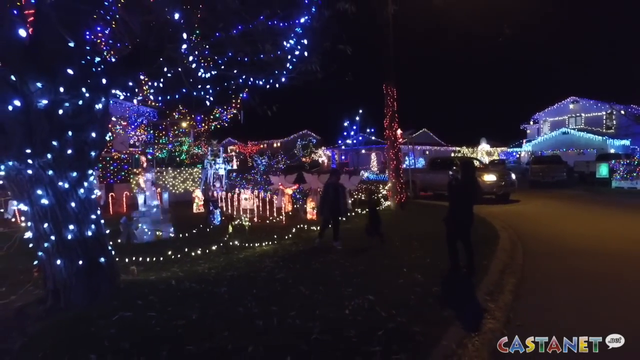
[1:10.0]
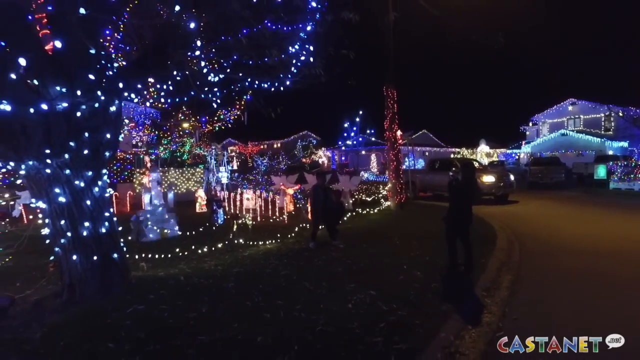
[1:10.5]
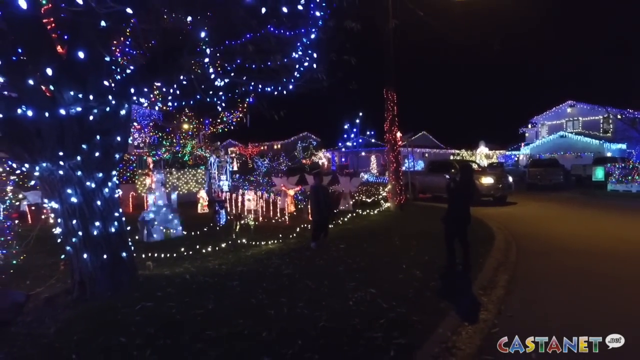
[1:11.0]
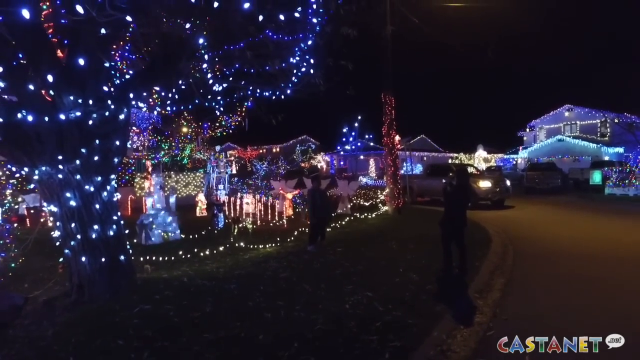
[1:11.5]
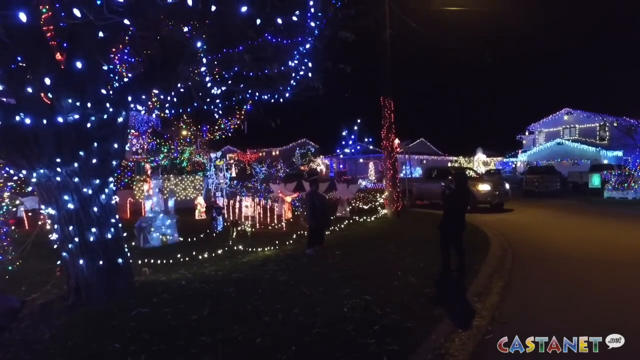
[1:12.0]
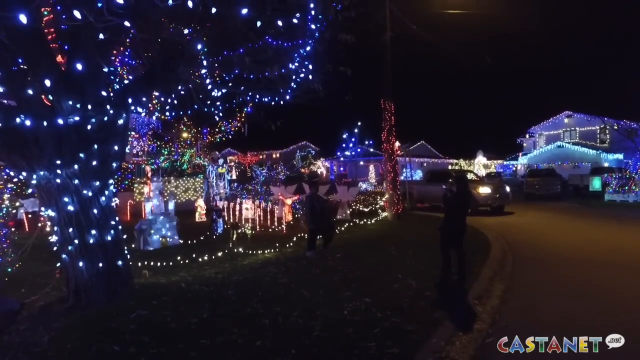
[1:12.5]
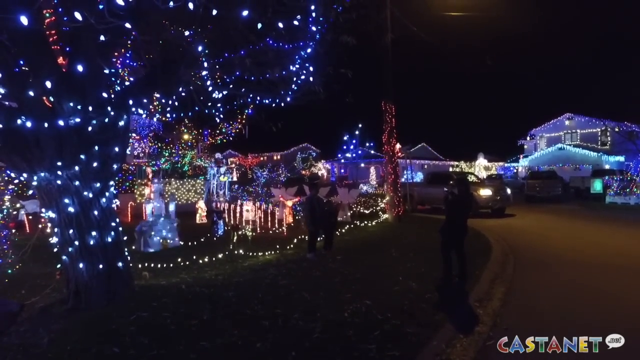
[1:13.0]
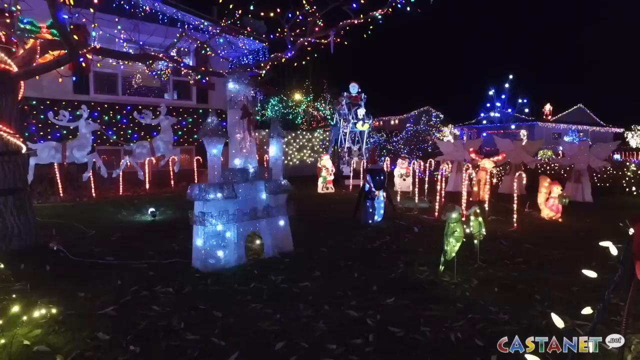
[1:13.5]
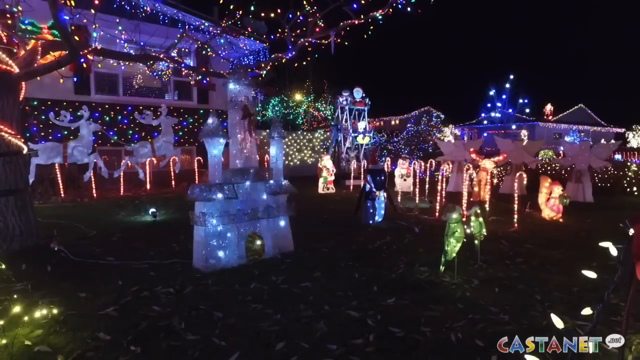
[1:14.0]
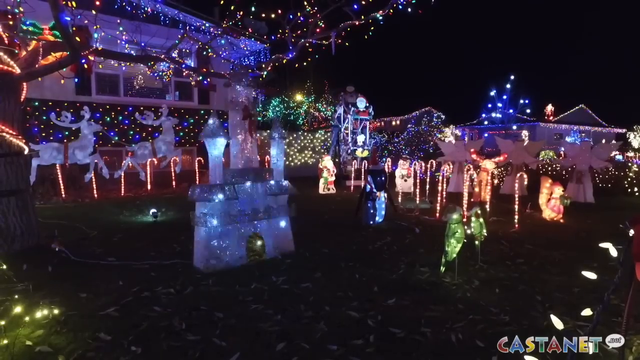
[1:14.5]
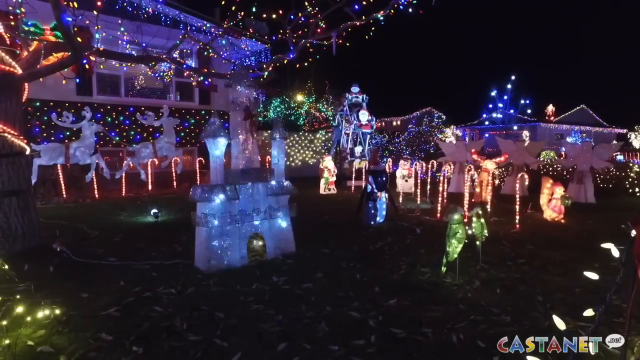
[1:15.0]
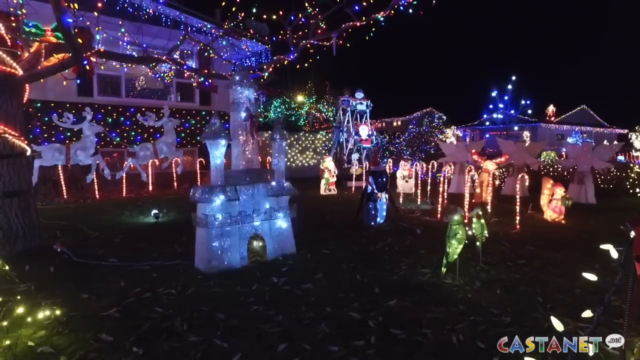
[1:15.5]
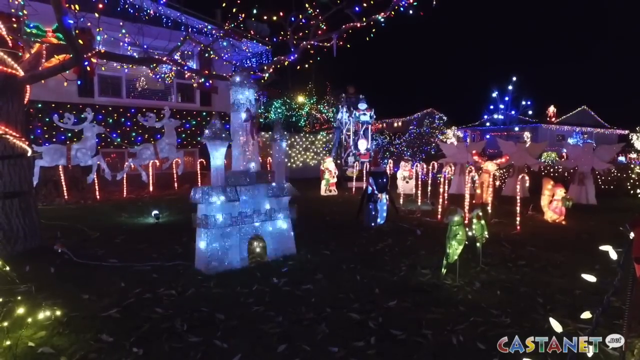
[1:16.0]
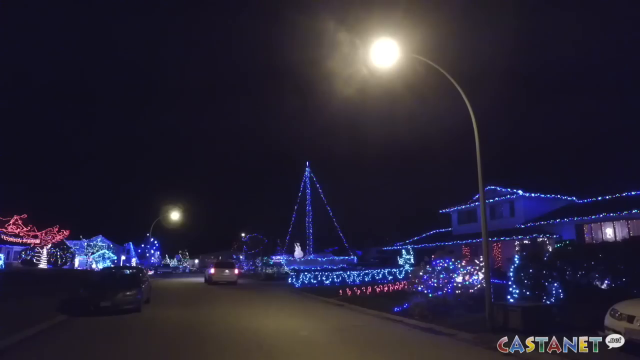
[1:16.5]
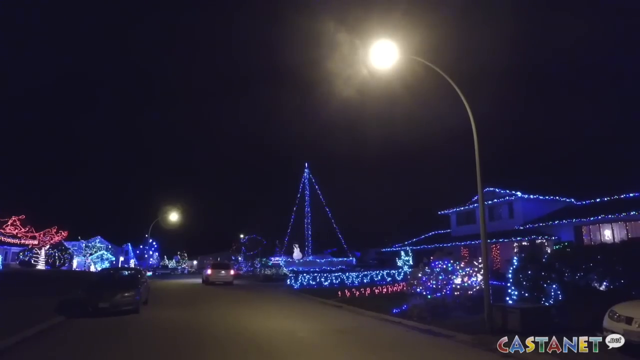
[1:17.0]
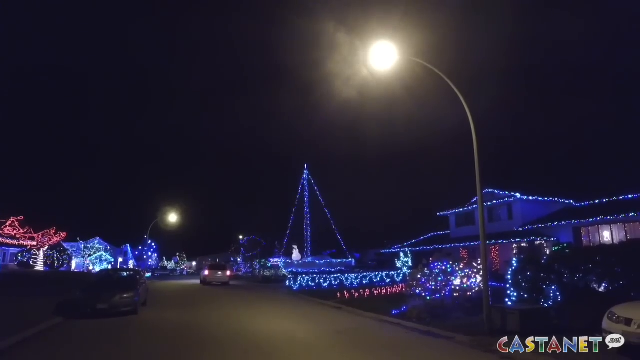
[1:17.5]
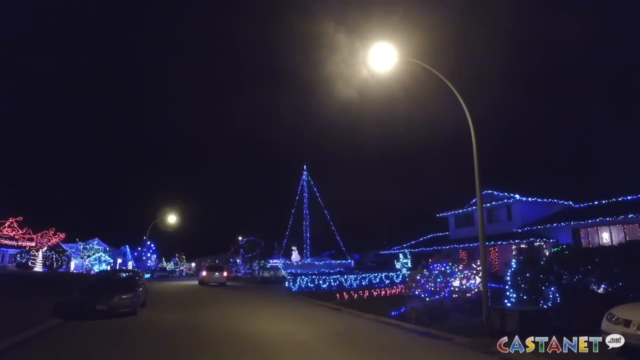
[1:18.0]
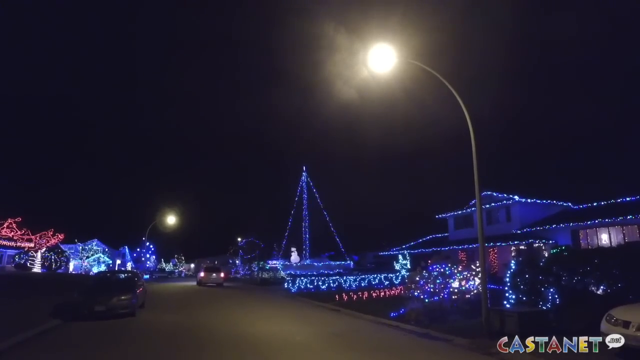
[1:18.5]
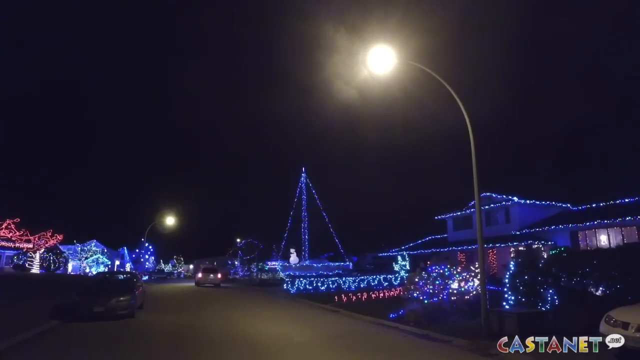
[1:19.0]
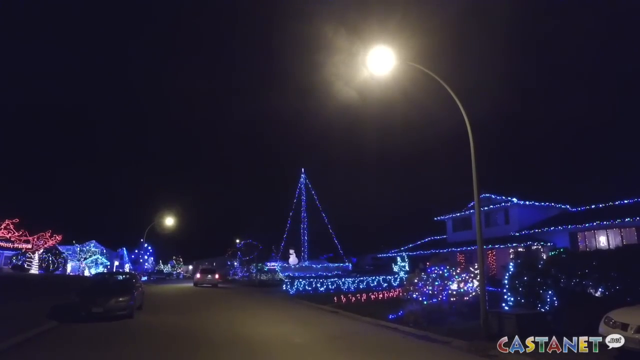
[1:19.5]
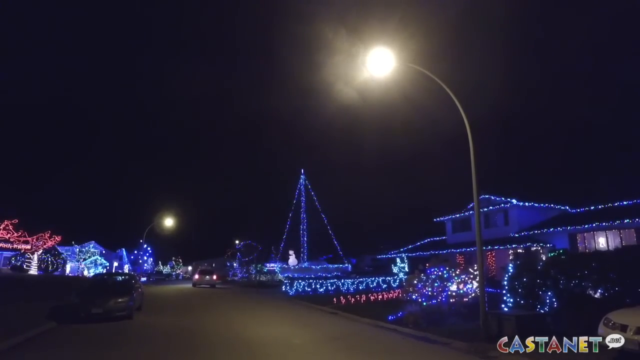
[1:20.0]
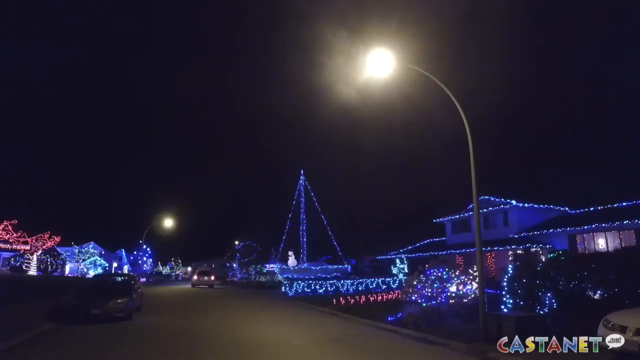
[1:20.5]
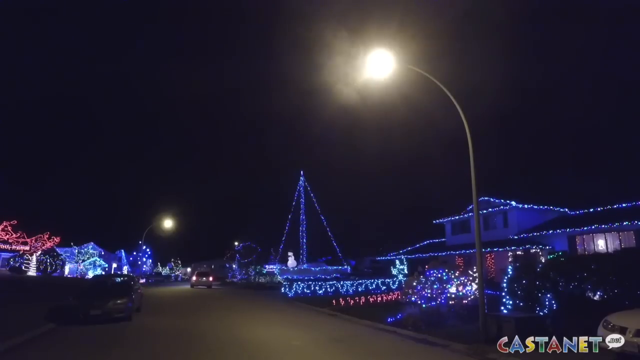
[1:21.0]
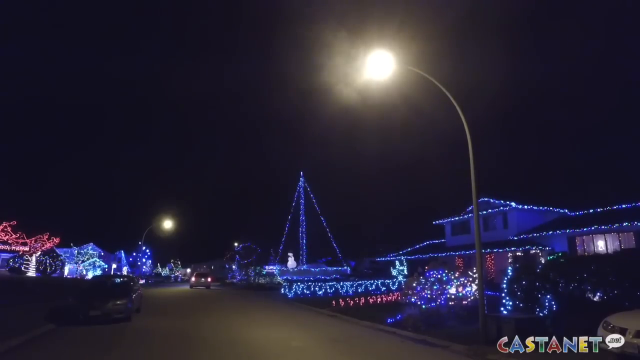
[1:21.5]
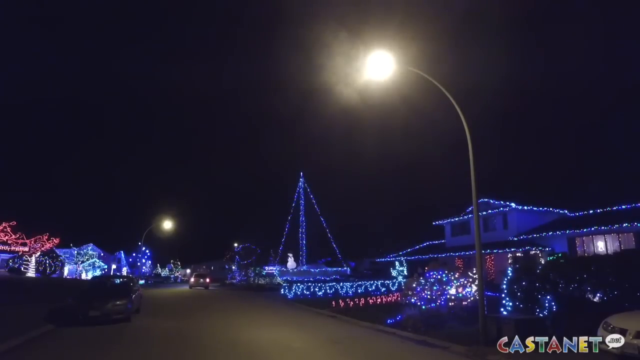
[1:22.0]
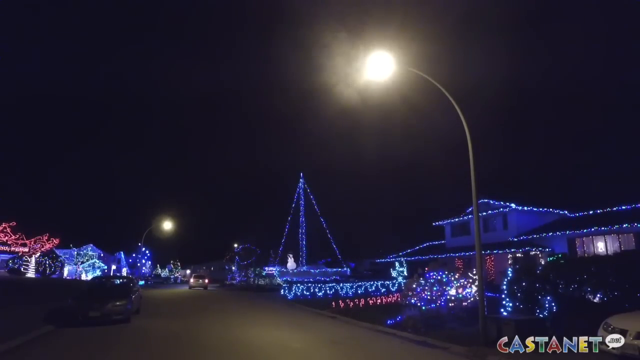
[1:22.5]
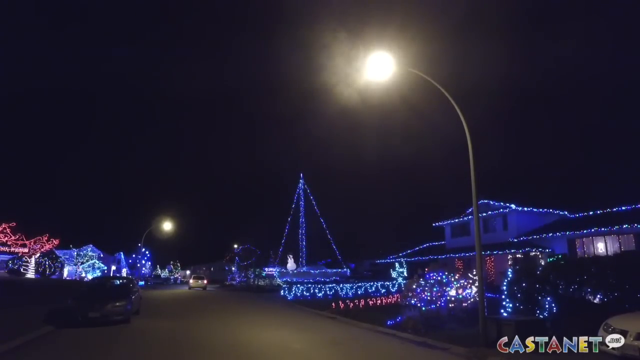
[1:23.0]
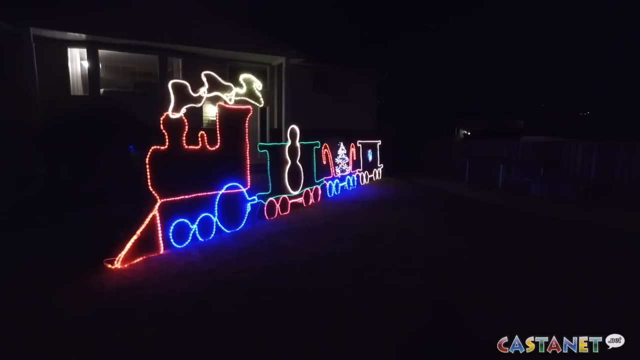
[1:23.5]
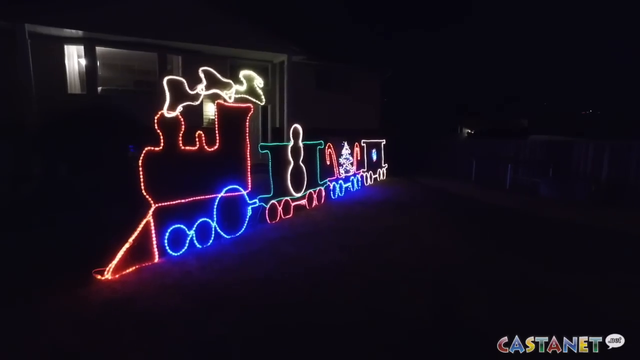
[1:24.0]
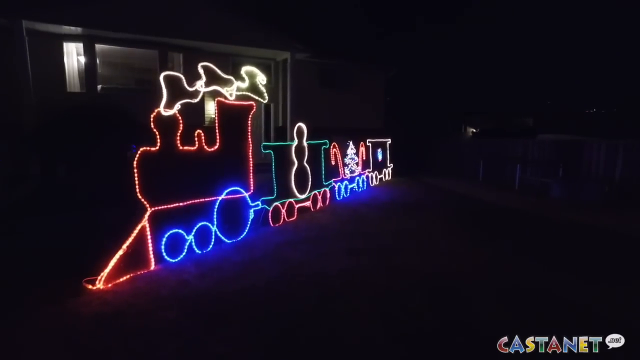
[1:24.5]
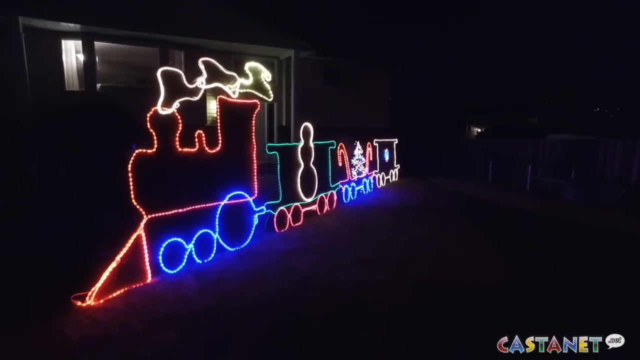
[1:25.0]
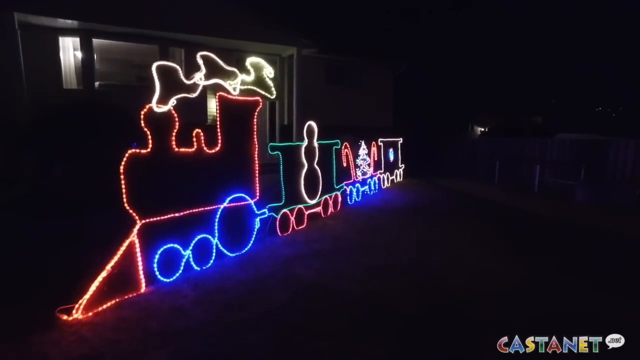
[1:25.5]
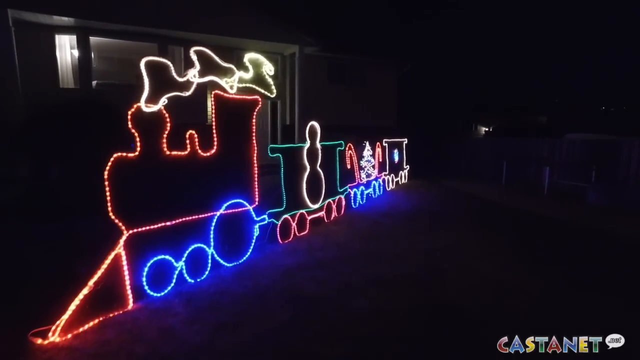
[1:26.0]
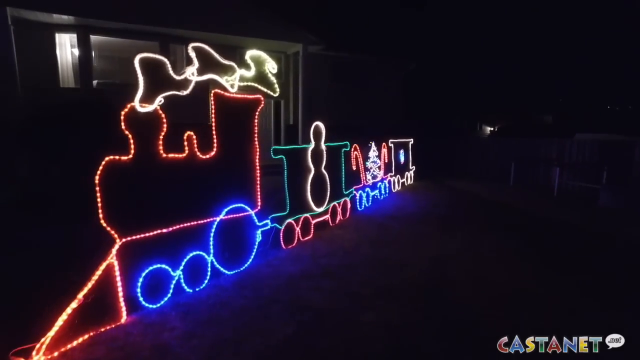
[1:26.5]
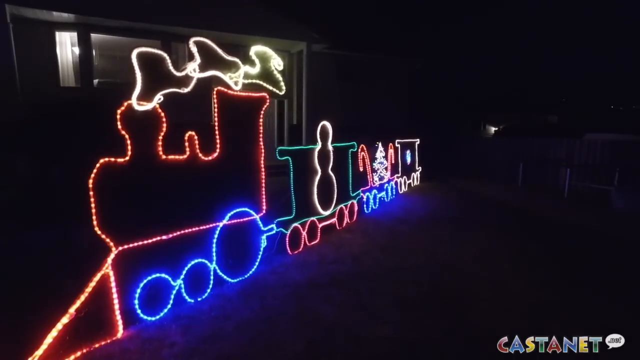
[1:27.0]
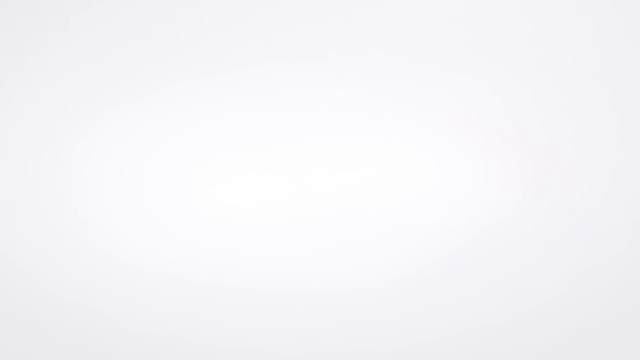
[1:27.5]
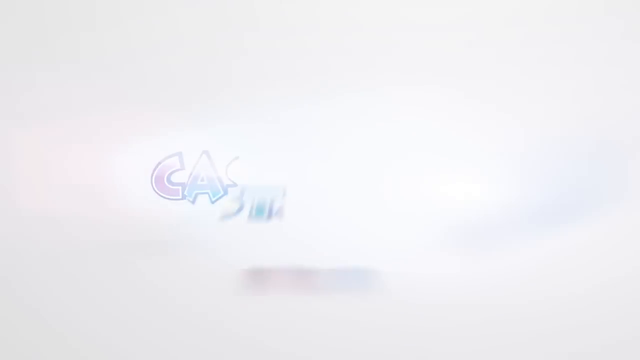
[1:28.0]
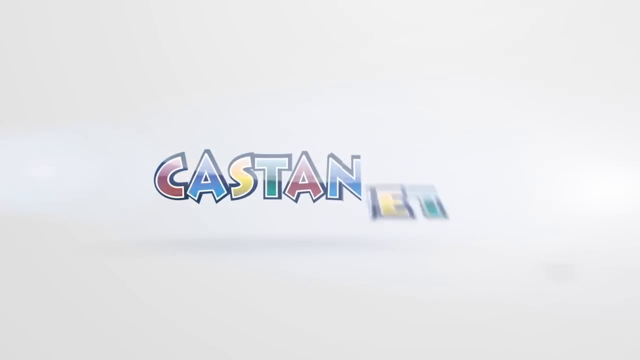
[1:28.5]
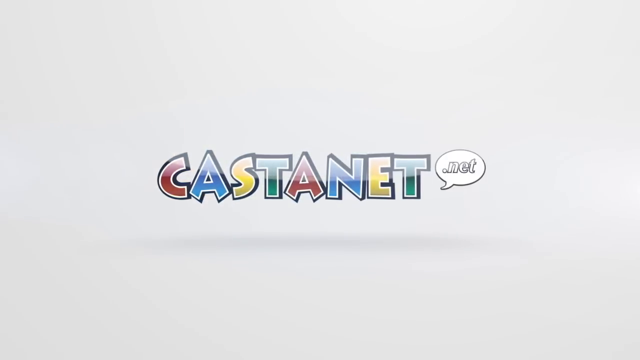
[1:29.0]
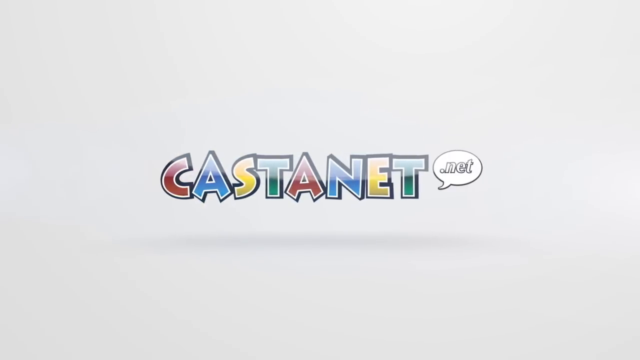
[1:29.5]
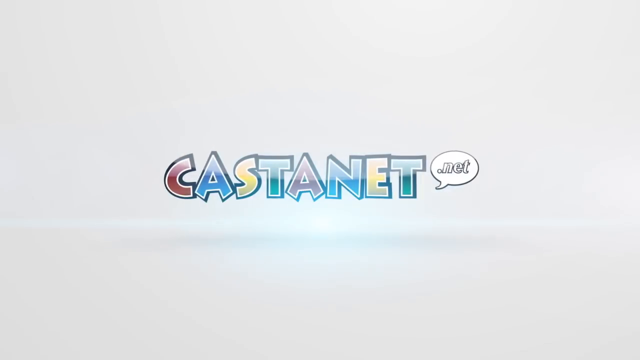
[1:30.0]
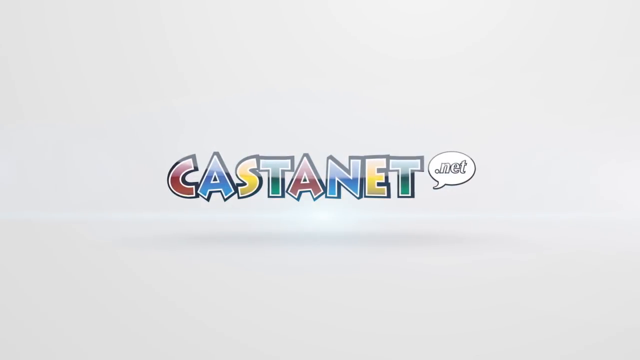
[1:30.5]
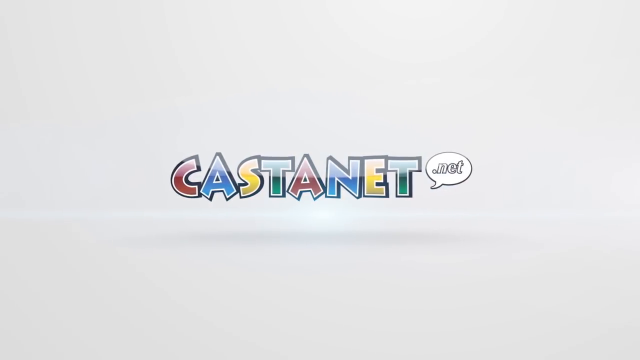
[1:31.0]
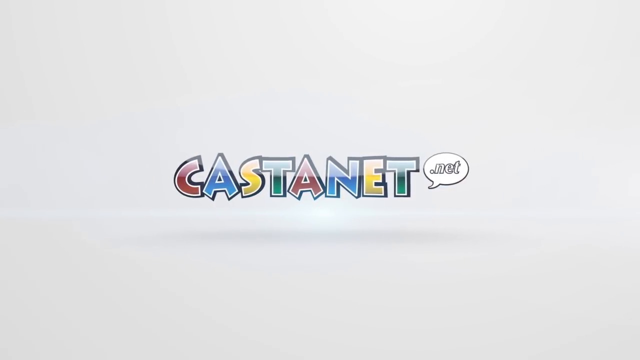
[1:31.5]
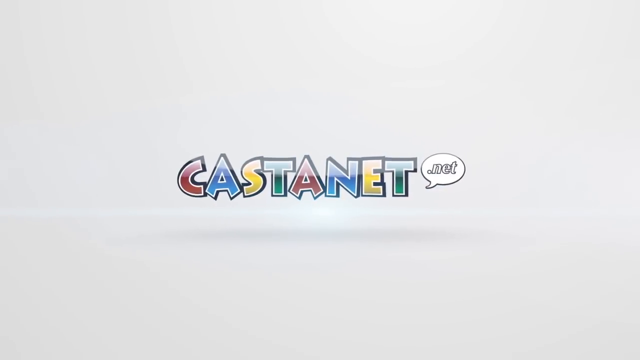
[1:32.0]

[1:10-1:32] A truck with both of its lights on is in the background on the left side. Two people can be seen, one walking towards the other, along with all the Christmas lights on a few different houses that blur together in the background so they cannot really be counted. One house has so many blue lights that it looks blue. On the right side is a big part of a tree with a bunch of little white light bulbs on it. The camera goes backwards a little and tilts up, then focuses on a castle, and then the view hurries and changes to a street light, a car going down the street, and another light farther down. A bunch of different houses with a bunch of different Christmas lights appear, and a tree off in the distance on the right side is lit up with red lights. The sky is black, with no stars or moon showing. Then the view goes to a light-up train that is red with blue wheels. There looks like a snowman in the middle part in the lit-up green area, what looks like a gingerbread man in the third row with candy canes on the side, and a yellow caboose. The view then goes back to something in different colors like a rainbow, with a white part with a little speech bubble; it also shows at the very bottom of the screen while the Christmas lights are shown.